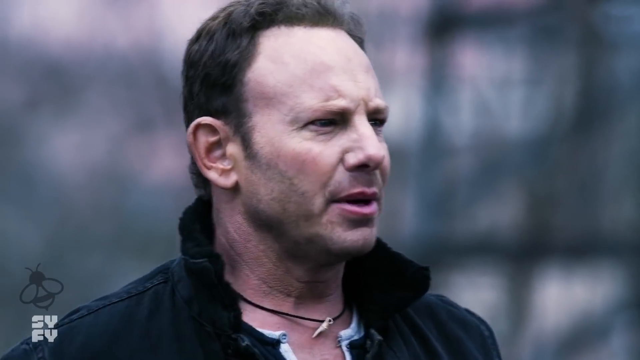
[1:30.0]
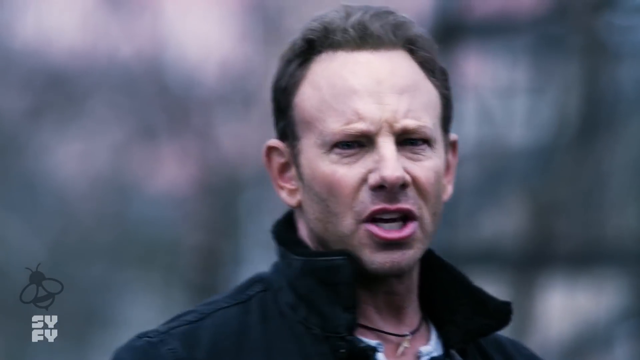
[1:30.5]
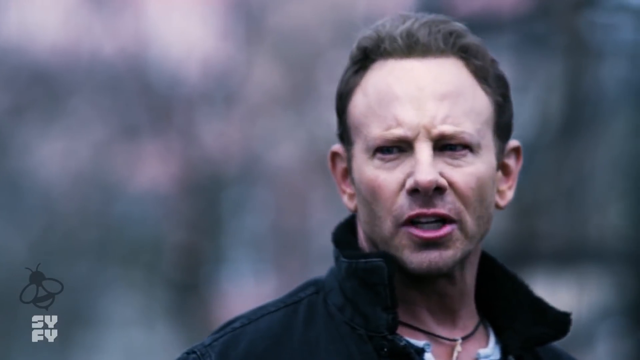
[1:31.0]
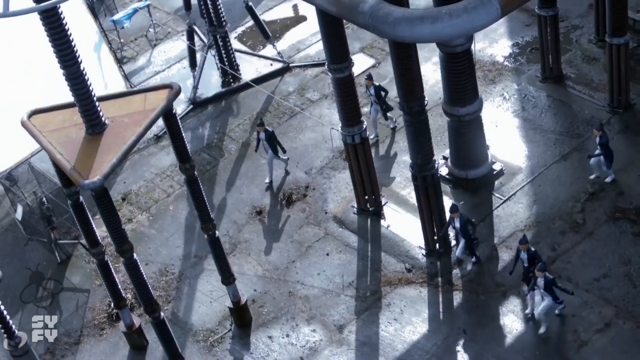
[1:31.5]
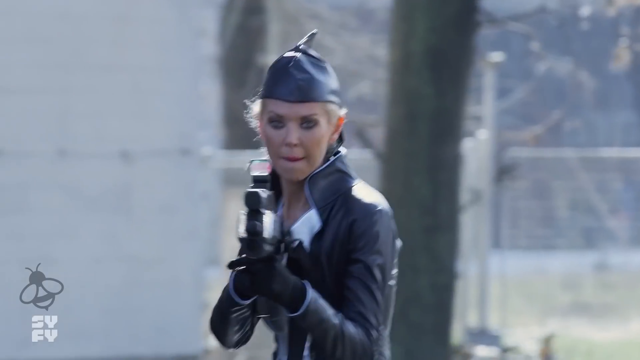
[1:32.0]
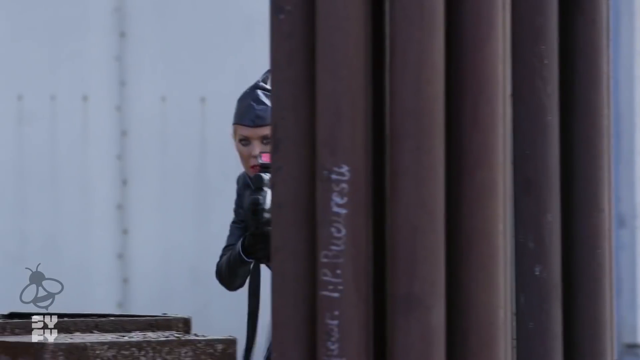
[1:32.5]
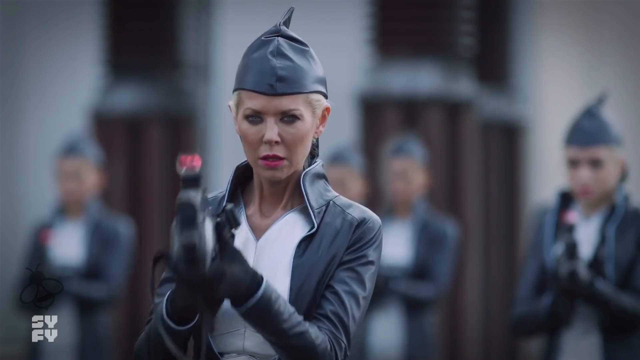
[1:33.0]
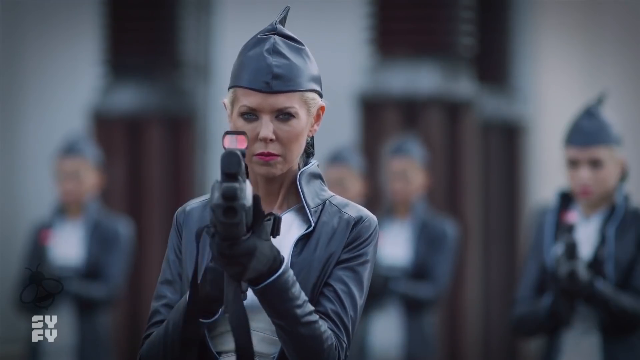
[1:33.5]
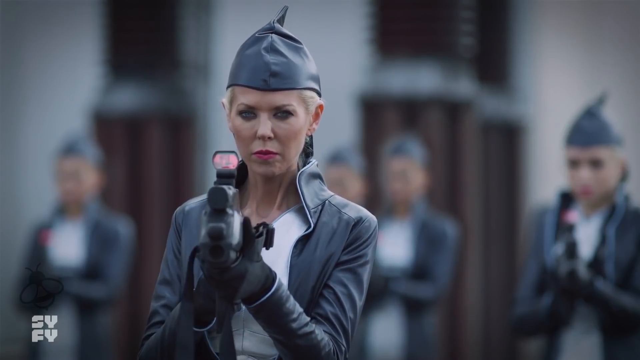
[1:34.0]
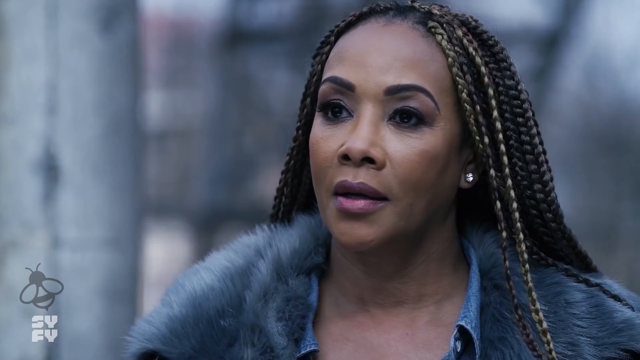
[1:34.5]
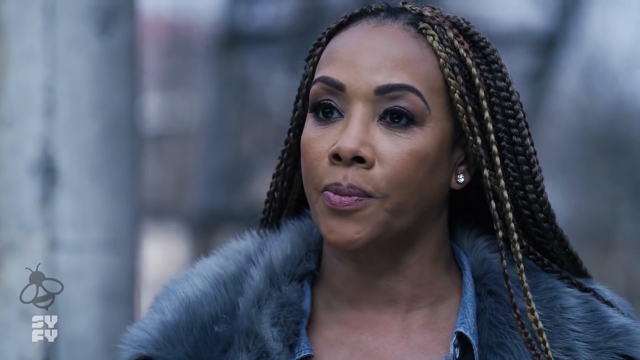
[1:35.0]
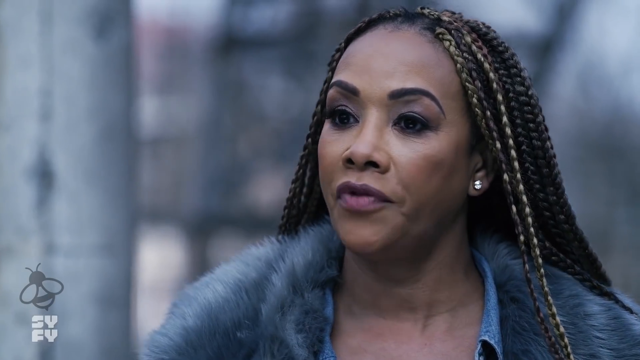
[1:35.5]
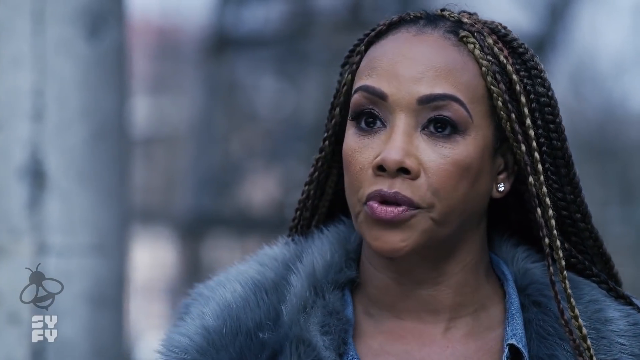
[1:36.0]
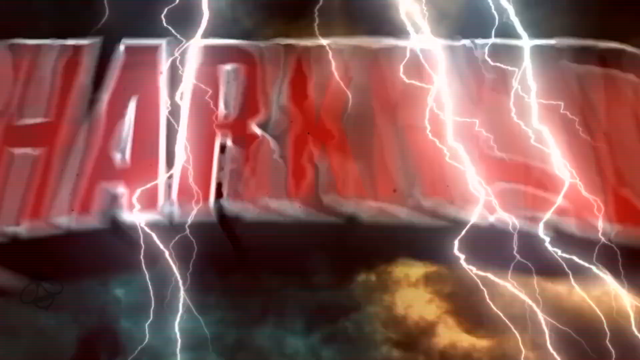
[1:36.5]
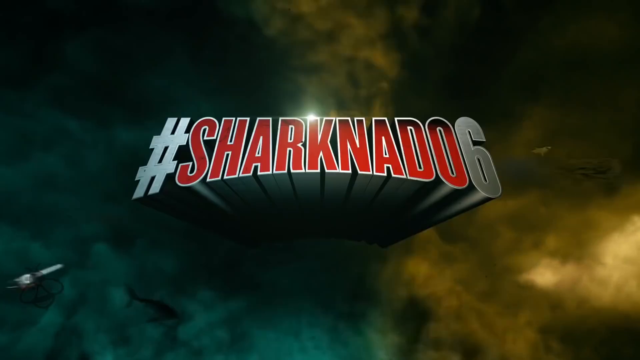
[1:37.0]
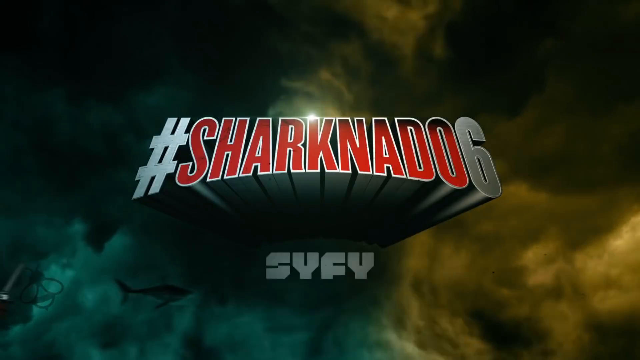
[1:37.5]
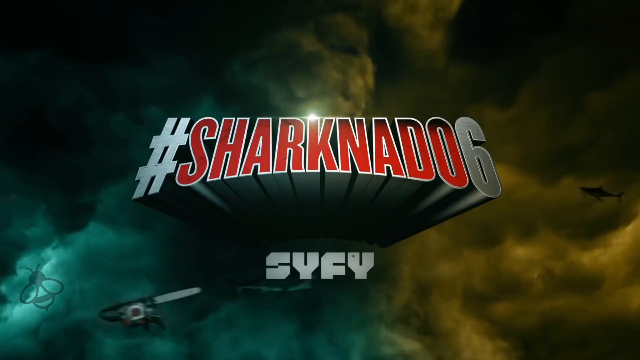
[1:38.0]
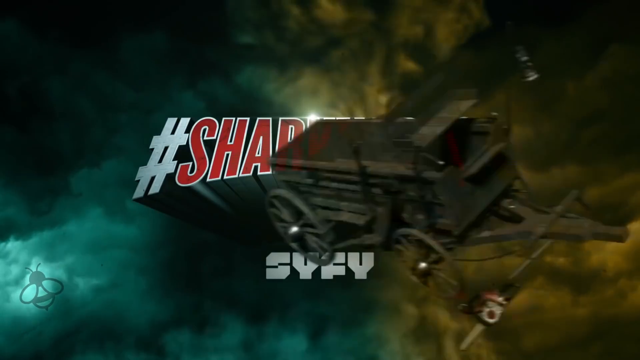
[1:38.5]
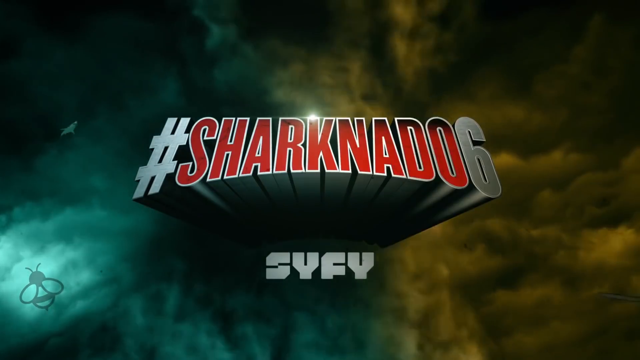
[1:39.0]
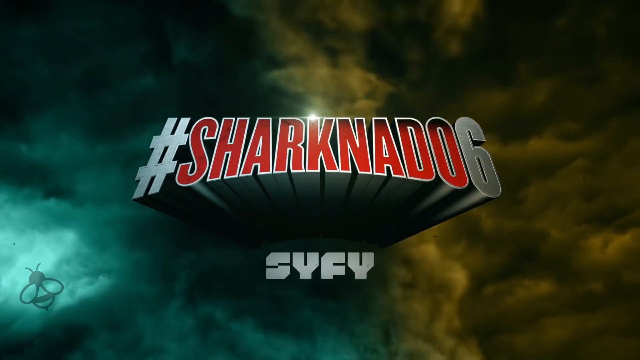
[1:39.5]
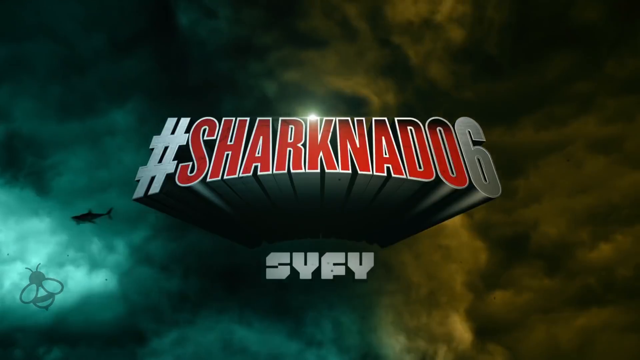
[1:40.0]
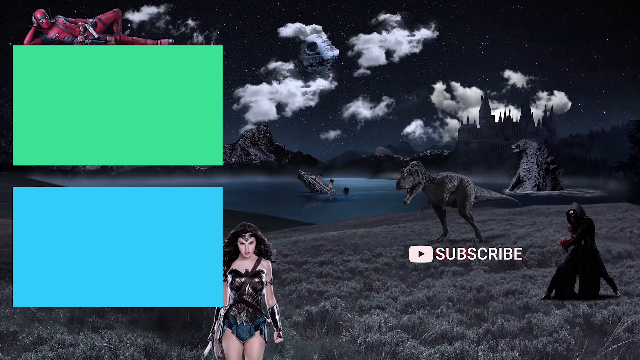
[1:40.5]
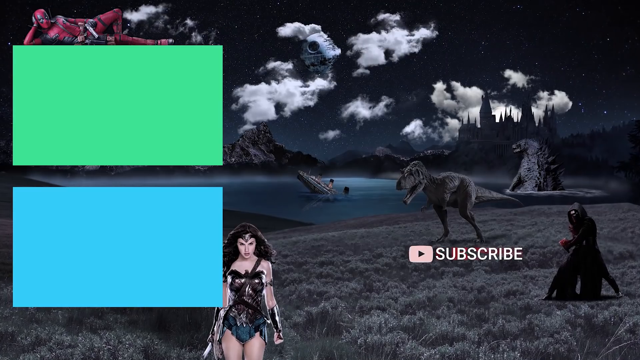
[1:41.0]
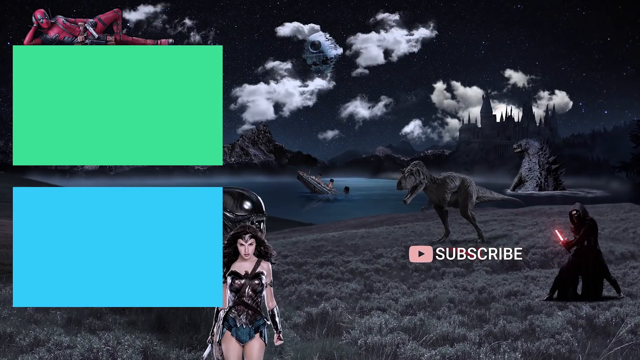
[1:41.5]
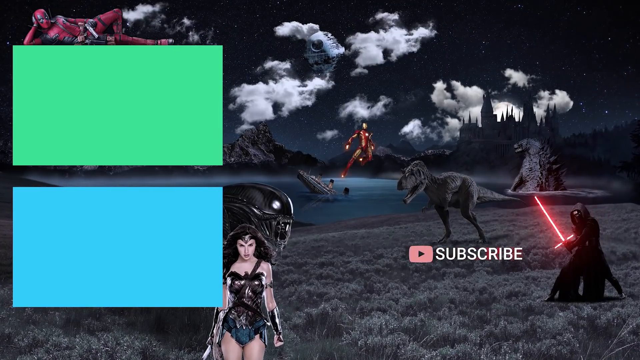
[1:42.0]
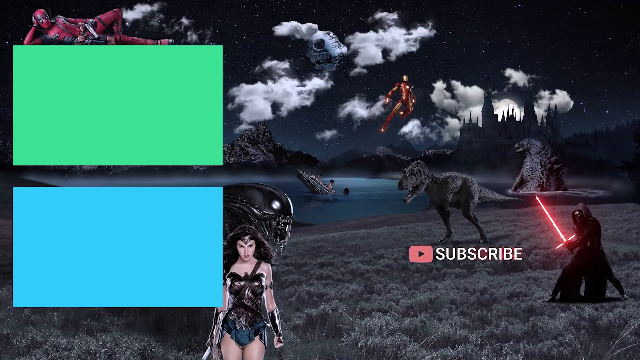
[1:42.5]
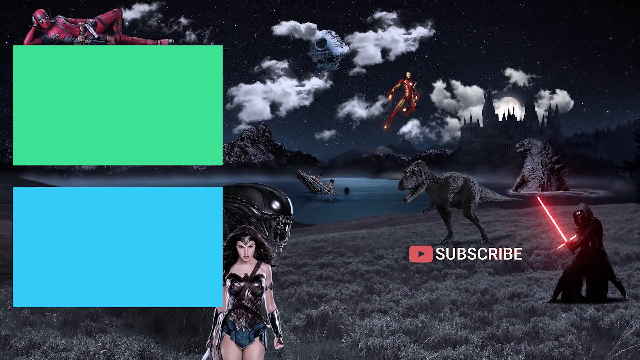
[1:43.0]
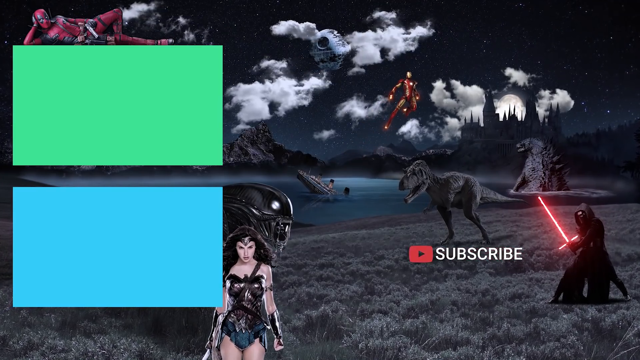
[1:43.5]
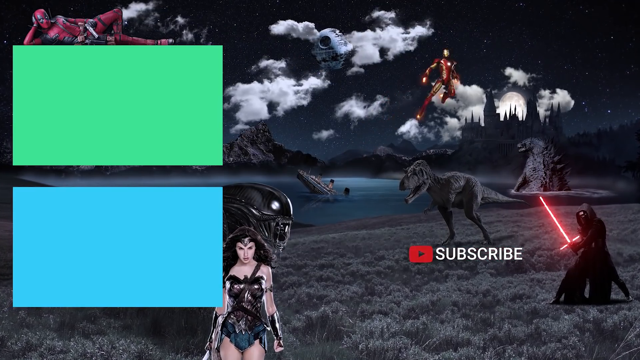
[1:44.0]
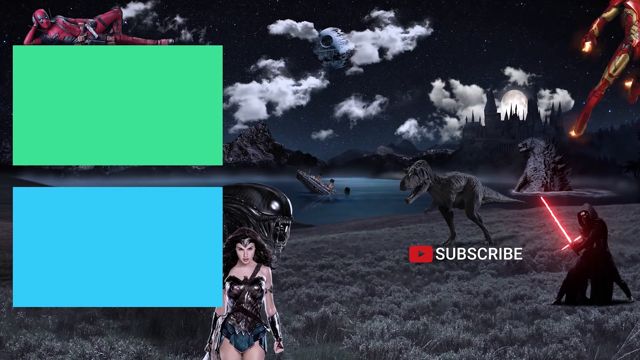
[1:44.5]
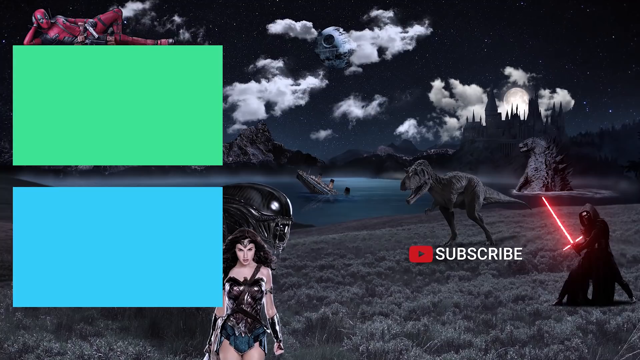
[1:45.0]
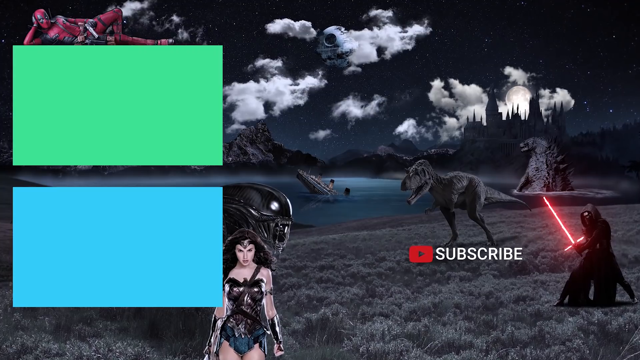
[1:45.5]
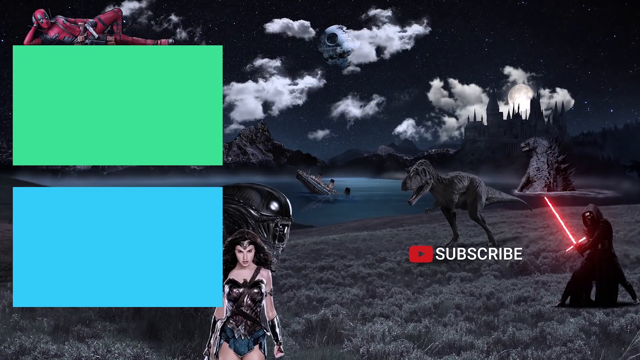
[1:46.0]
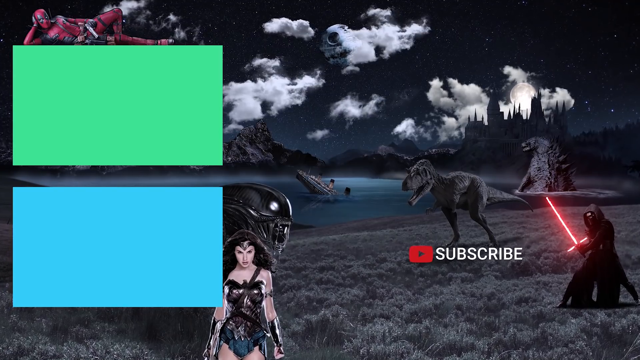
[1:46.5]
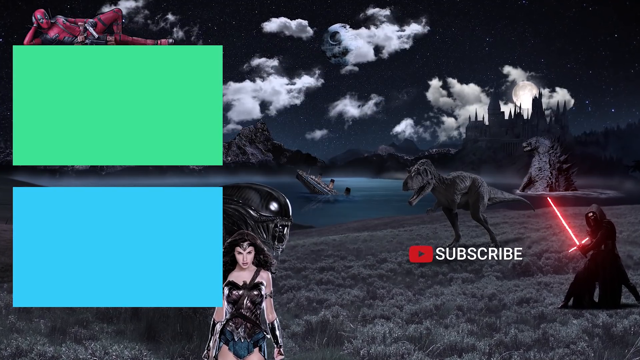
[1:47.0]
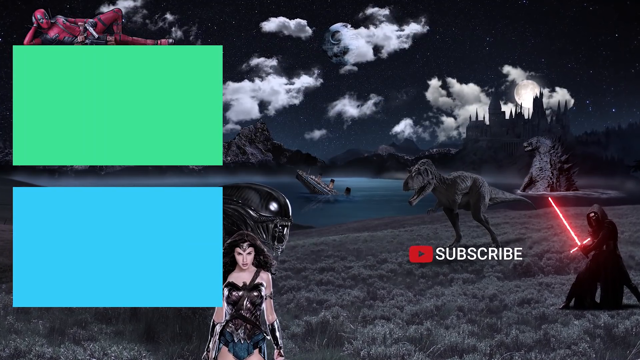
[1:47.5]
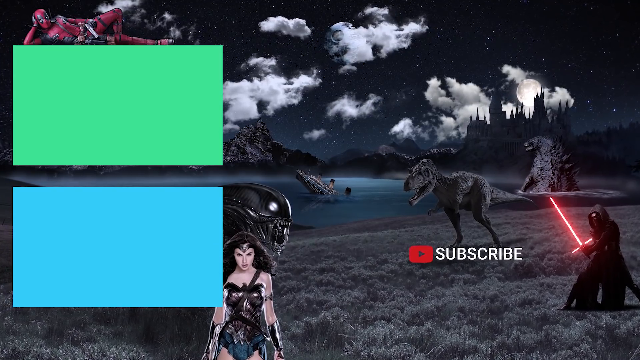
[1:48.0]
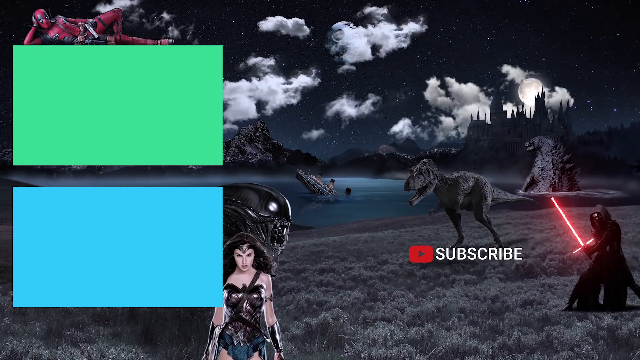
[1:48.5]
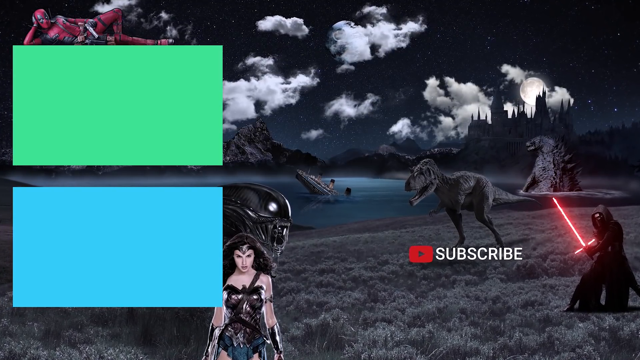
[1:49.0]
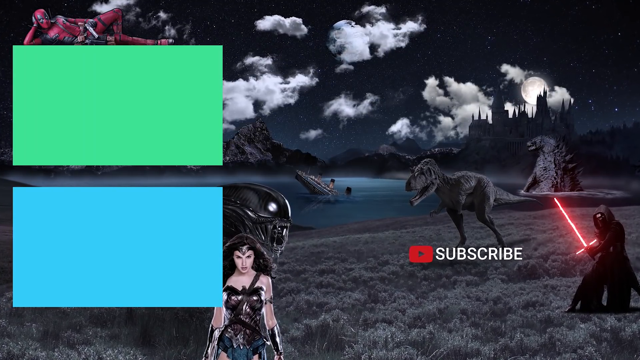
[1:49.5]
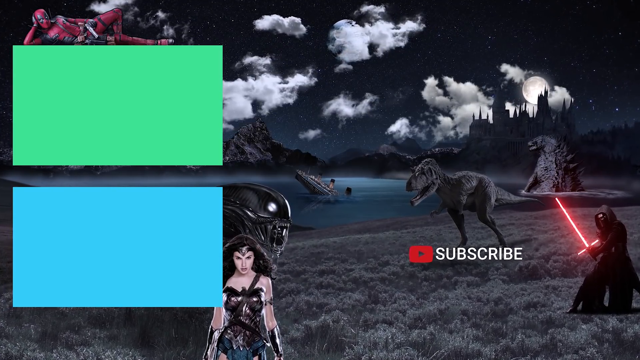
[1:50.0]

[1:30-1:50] The main character, having just subdued the metal shark with a thin metal rod, calls forth his people. A woman with a gun appears; the women all look the same, apparently clones. The man and the lady he was with stand there shocked. The screen reads "#sharknado6," things fly around, and sharks are visible in the tornado. The video ends on the end screen of the YouTube channel that posted it. In the left corners are a green box and a blue box. At the top of the green box, in the very top left, Deadpool lies on the green box, and Wonder Woman is at the very bottom next to the blue box. An unidentified character is in the very right corner. In the top middle is a Star Wars spacecraft, and there is a sinking ship, apparently the Titanic, along with a T-Rex and Godzilla. A castle is in the back, with mountain ranges, and text reads "subscribe." Iron Man flies out from behind the squares, and an alien from Romulus appears.